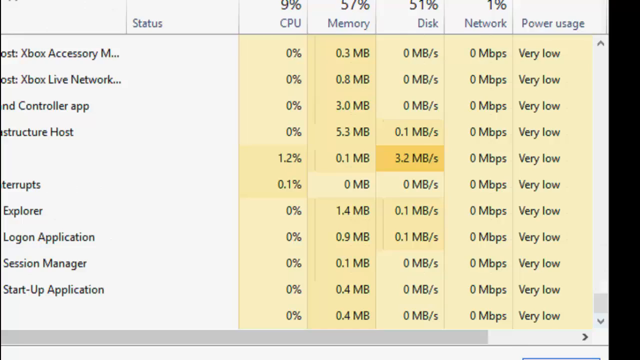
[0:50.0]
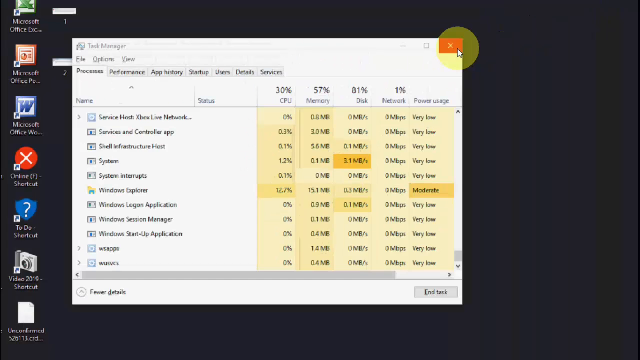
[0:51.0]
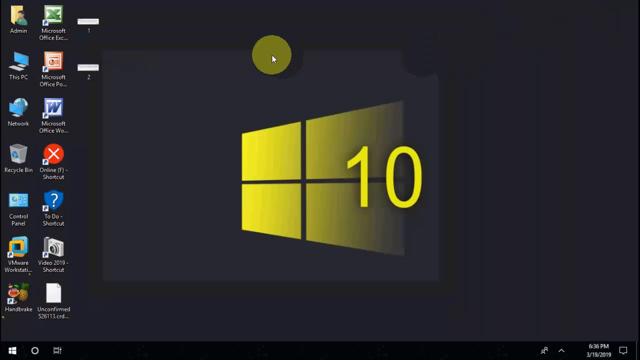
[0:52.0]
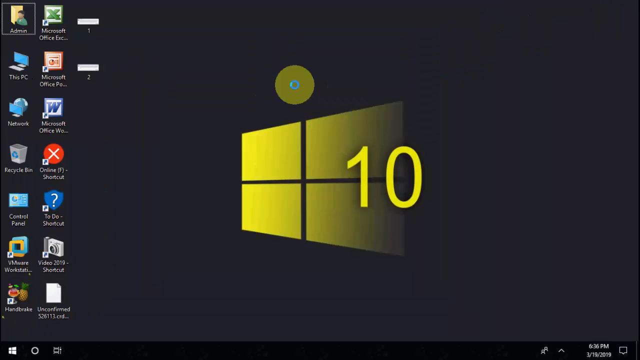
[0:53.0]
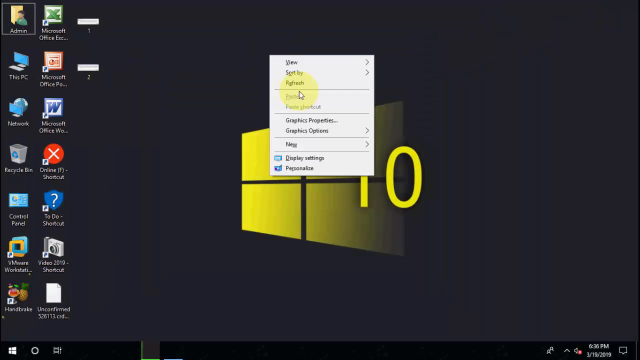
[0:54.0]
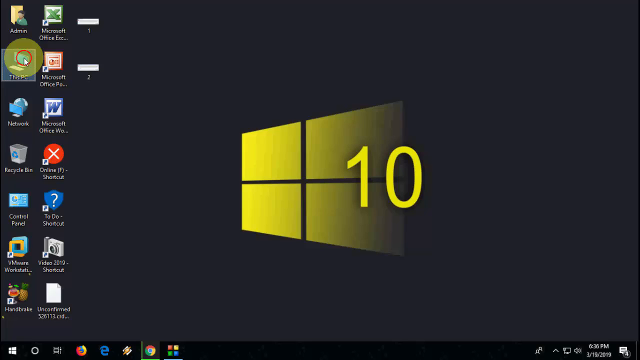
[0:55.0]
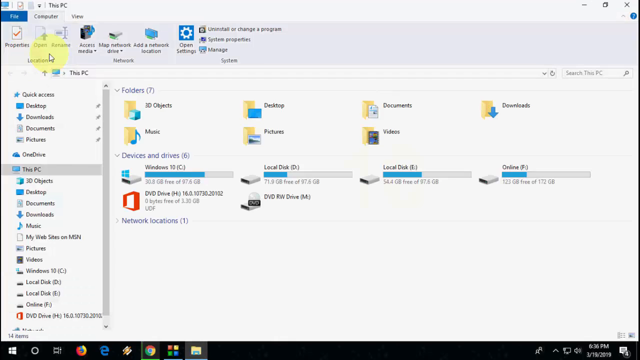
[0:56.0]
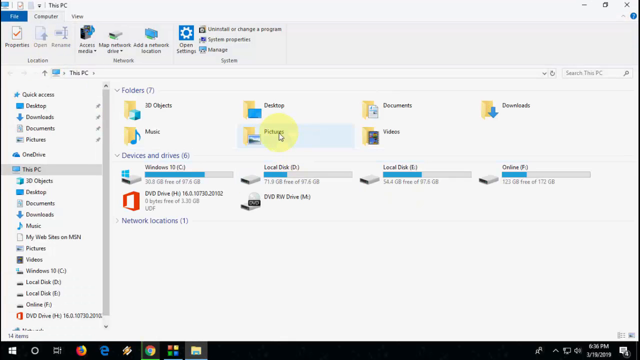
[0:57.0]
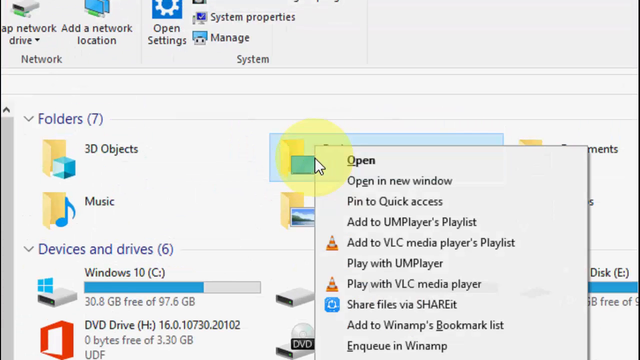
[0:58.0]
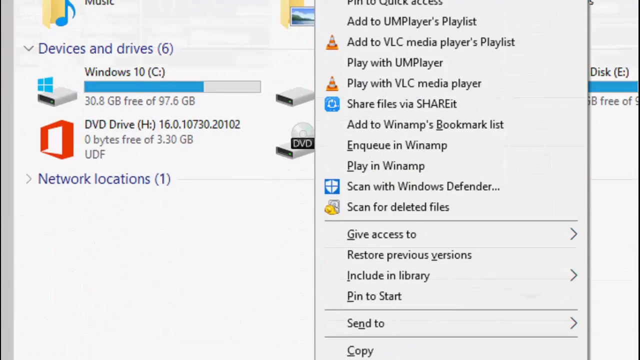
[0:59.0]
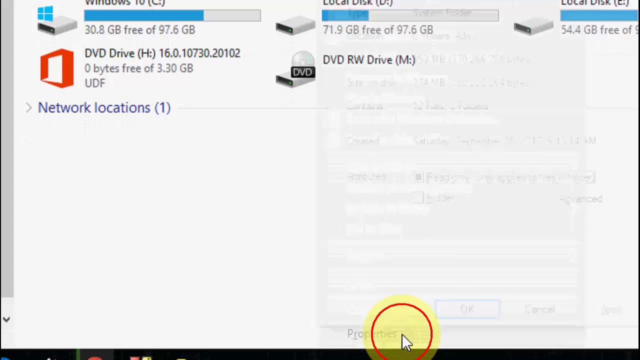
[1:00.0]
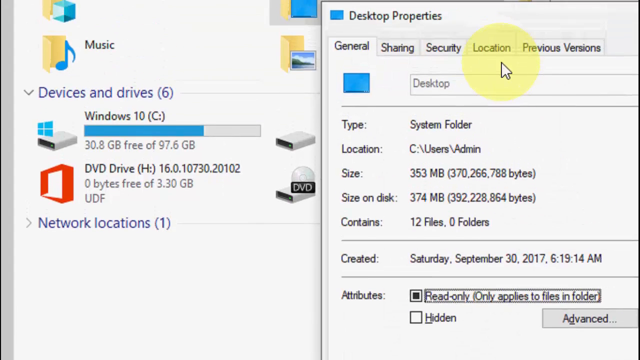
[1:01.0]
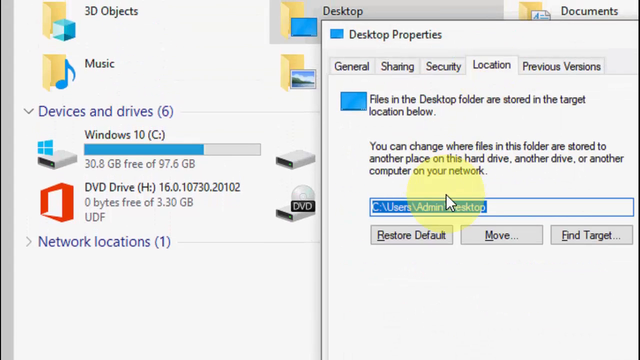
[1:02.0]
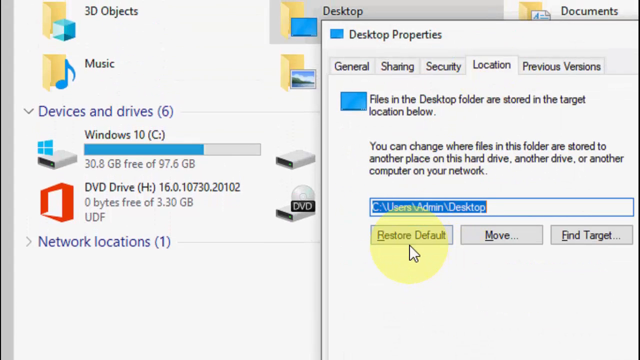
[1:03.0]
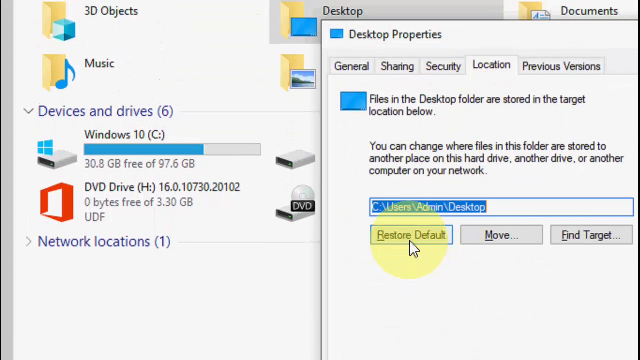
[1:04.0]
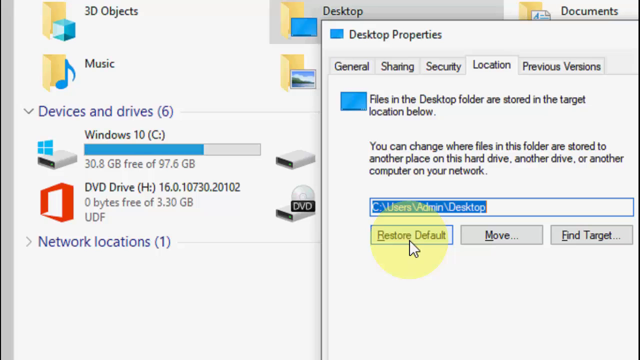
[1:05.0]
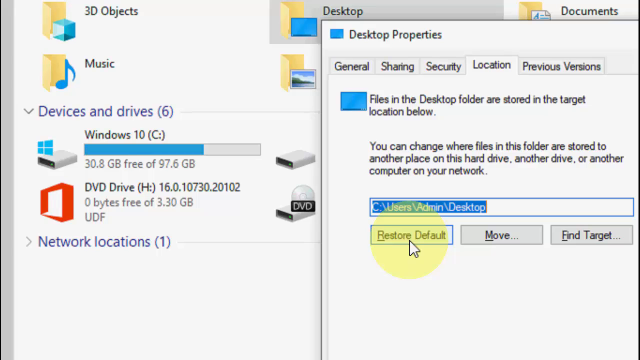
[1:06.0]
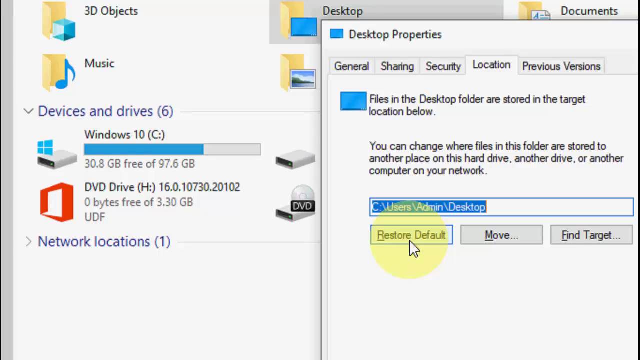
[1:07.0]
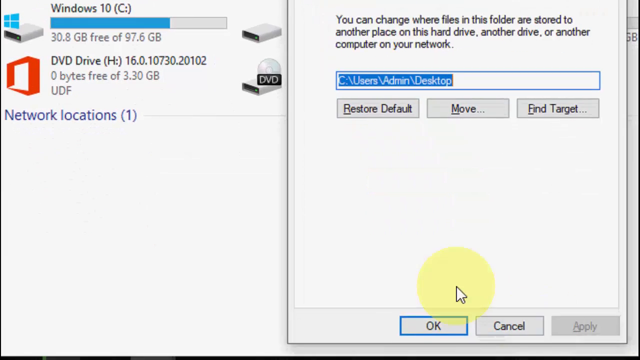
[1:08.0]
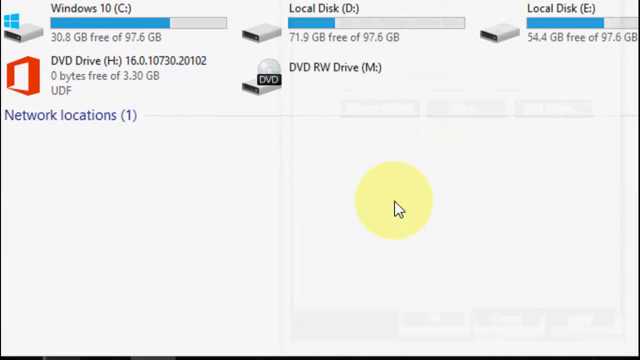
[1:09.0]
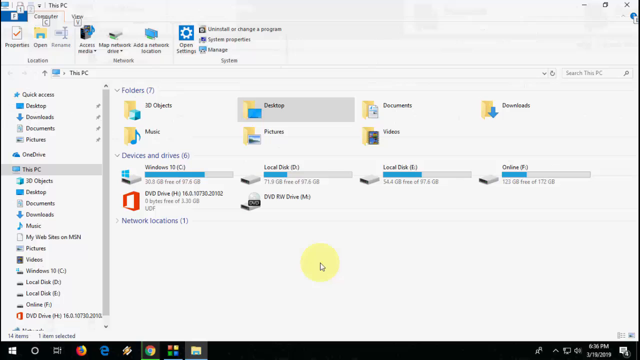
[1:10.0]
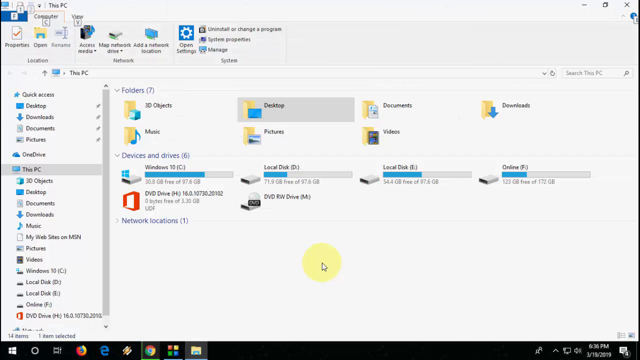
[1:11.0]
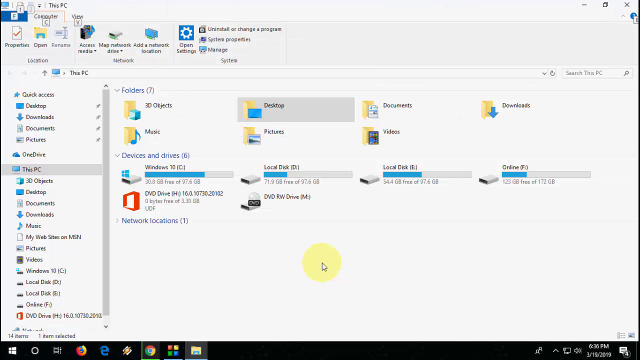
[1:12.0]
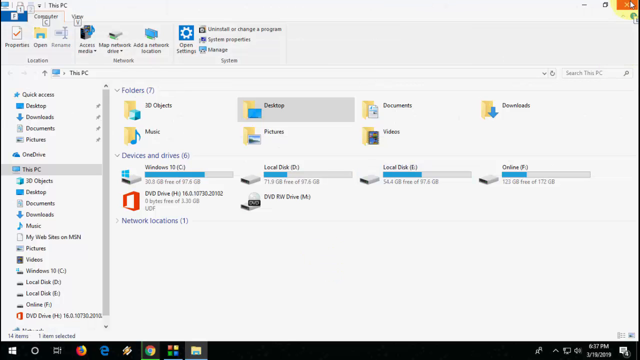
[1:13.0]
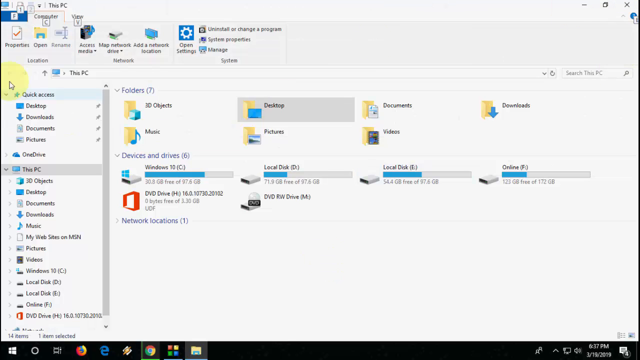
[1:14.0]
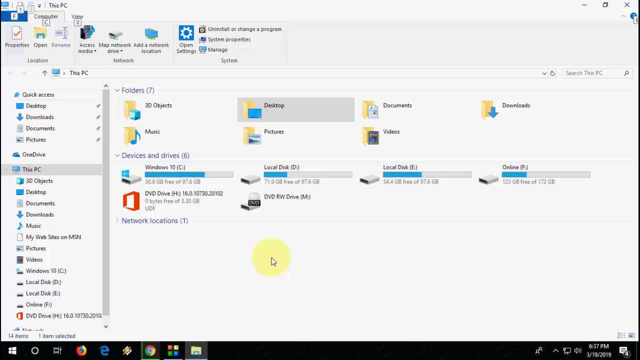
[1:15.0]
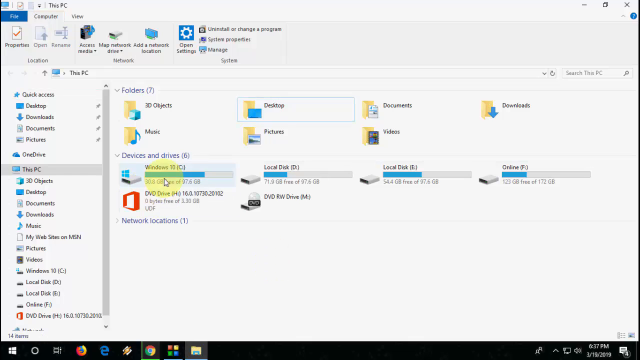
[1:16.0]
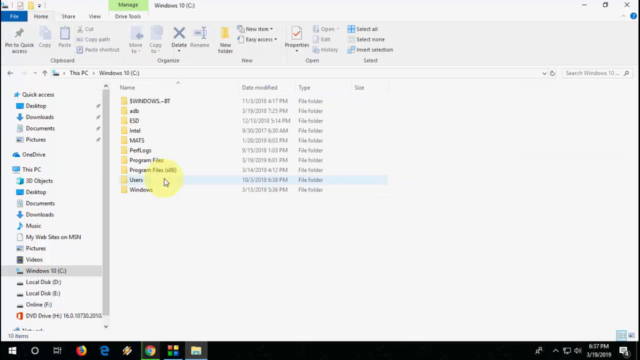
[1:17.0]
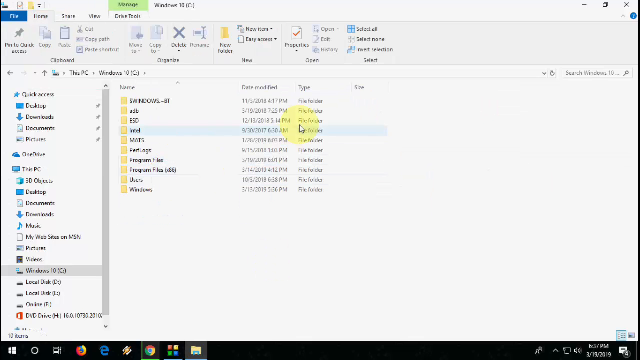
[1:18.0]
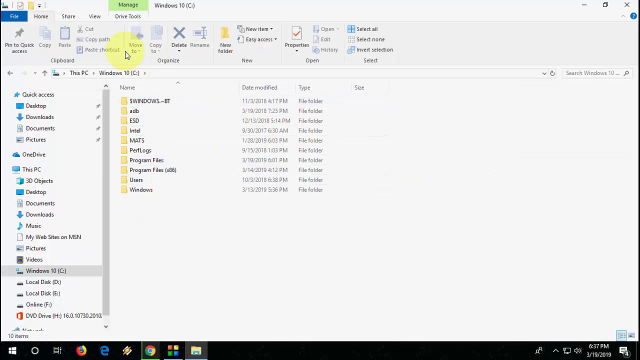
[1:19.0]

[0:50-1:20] The Task Manager window is zoomed in on the CPU, memory, disk, network, and power usage section. The view scrolls upward to show CPU usage at 30 percent, memory at 57 percent, disk at 81 percent, and network at 1 percent. The view zooms out, showing the mouse surrounded by a yellow circle that highlights its position. The mouse moves to the red close button in the very top right corner of the Task Manager and clicks it, then moves to the middle of the desktop background, which is the Windows logo in yellow with a large yellow 10 on it. The user right-clicks the background to open the context menu, mouses over Refresh, and clicks it. The pointer then moves to the This PC shortcut on the desktop and double-clicks it, opening a window named "this PC" with various folders and locations on the computer. The user mouses over Pictures, then the view zooms in on Desktop, which they right-click, scrolling down to Properties in the context menu and clicking it. A new window called "desktop properties" opens, with tabs across the top: General, Sharing, Security, Location, and Previous Versions. General is the active tab; the mouse moves to Location and clicks that tab.